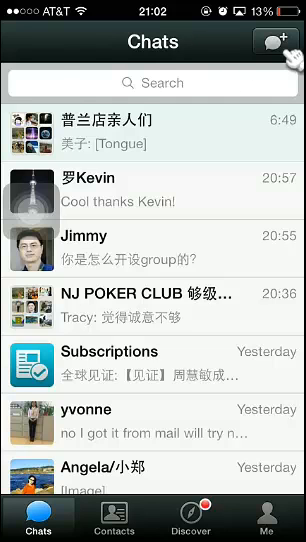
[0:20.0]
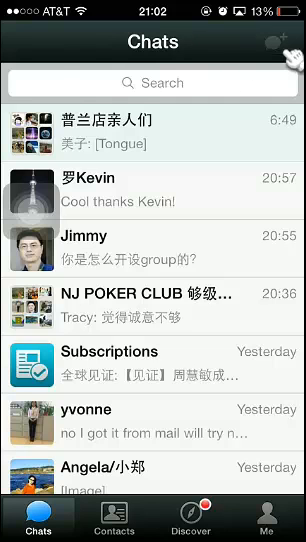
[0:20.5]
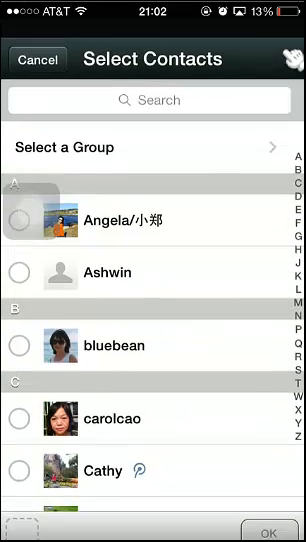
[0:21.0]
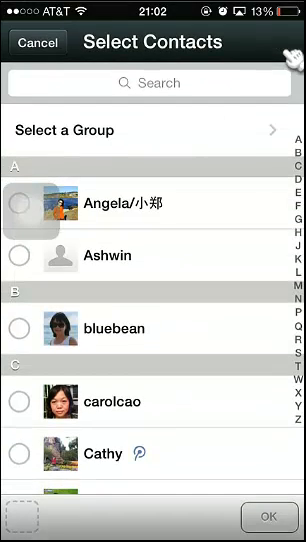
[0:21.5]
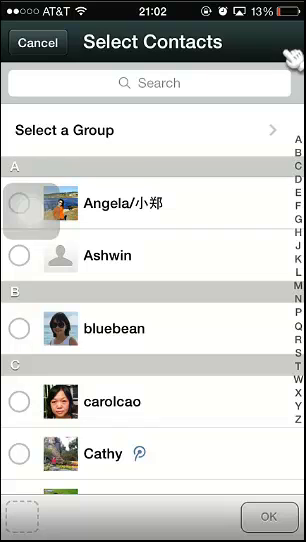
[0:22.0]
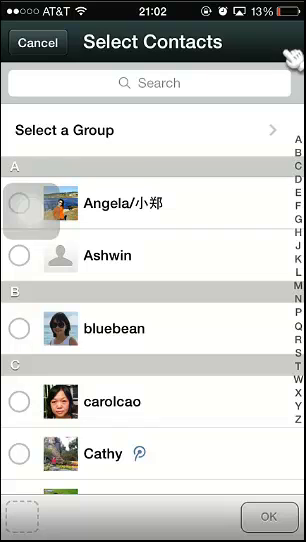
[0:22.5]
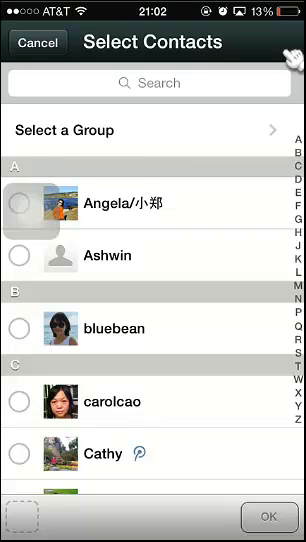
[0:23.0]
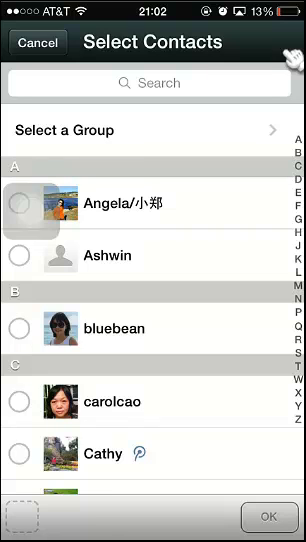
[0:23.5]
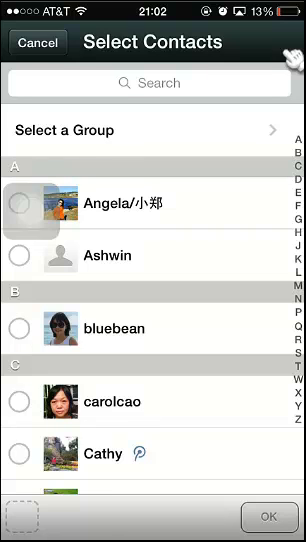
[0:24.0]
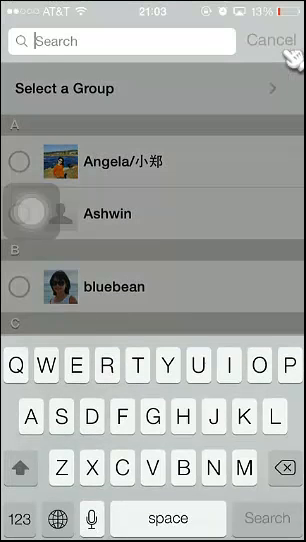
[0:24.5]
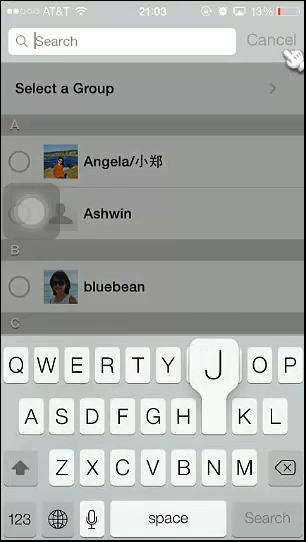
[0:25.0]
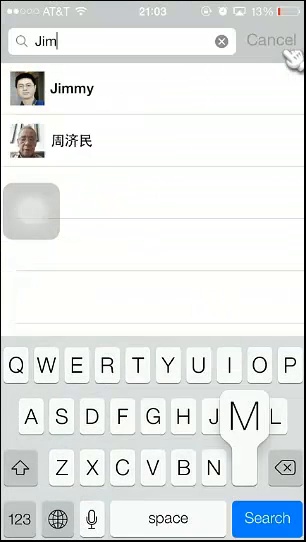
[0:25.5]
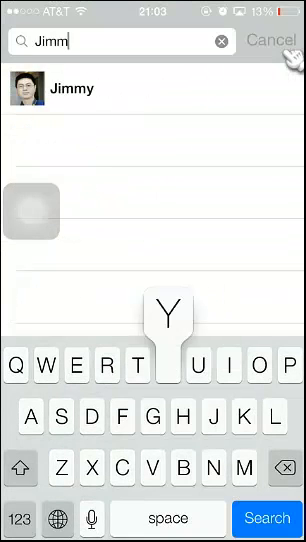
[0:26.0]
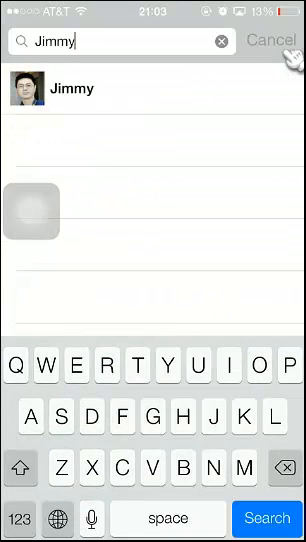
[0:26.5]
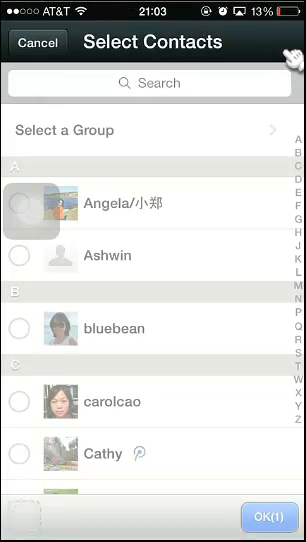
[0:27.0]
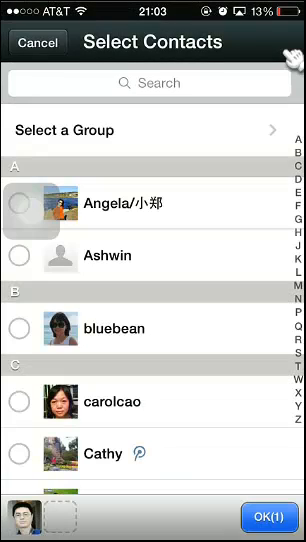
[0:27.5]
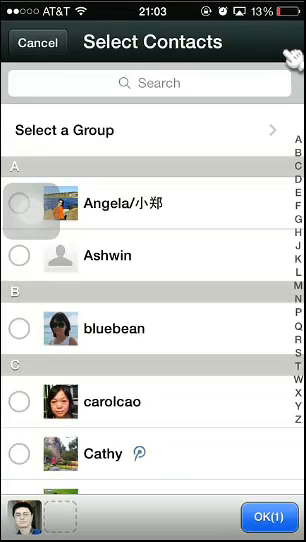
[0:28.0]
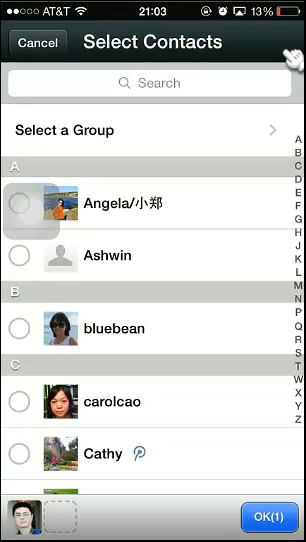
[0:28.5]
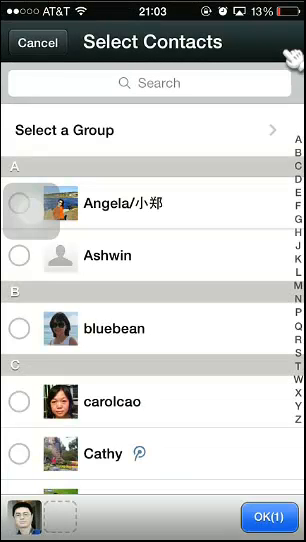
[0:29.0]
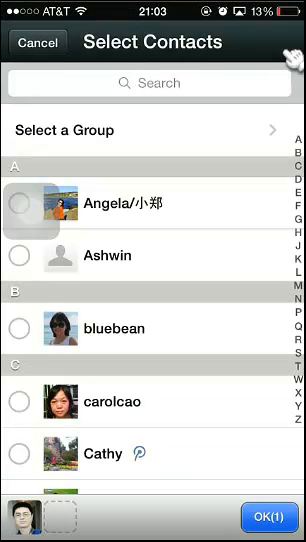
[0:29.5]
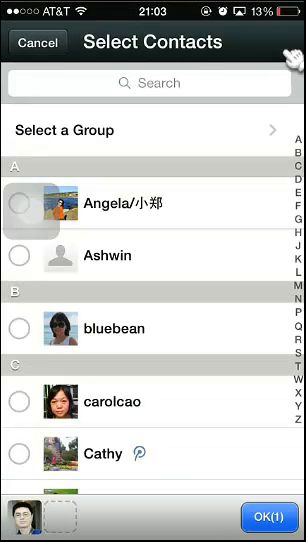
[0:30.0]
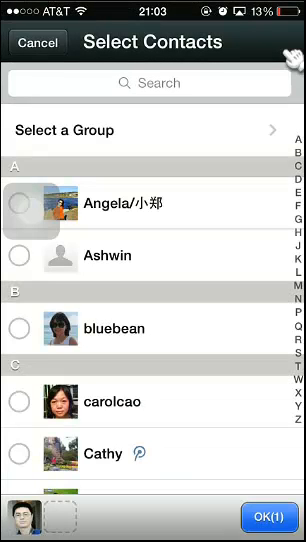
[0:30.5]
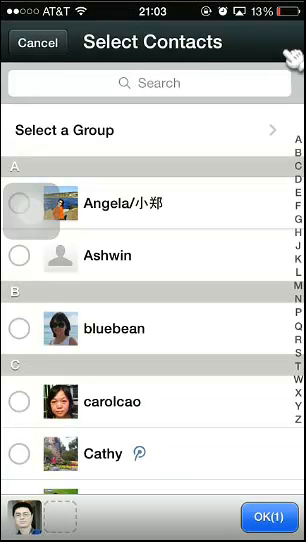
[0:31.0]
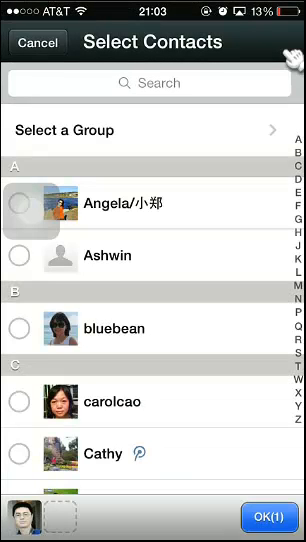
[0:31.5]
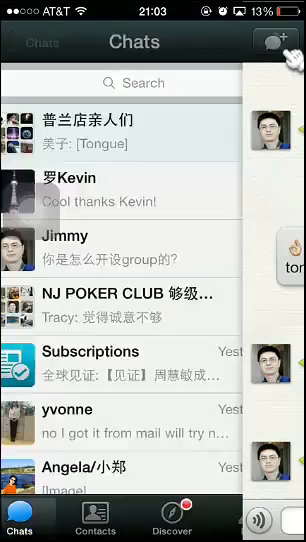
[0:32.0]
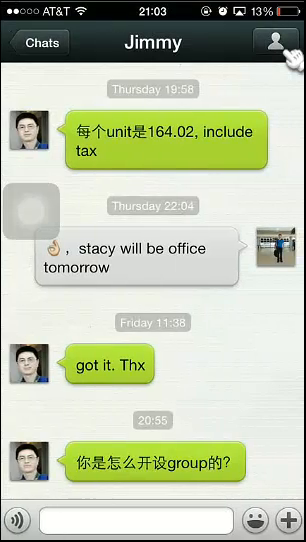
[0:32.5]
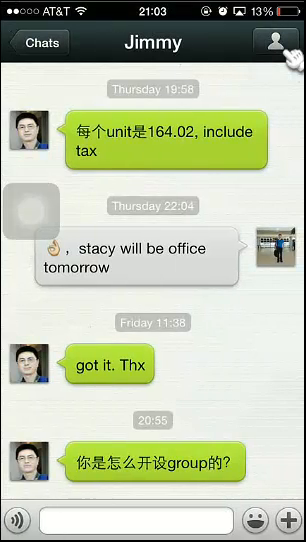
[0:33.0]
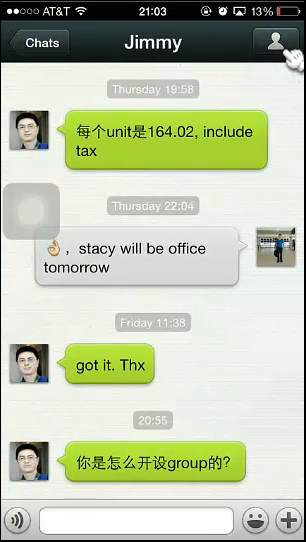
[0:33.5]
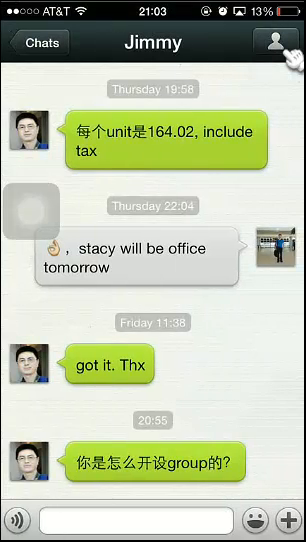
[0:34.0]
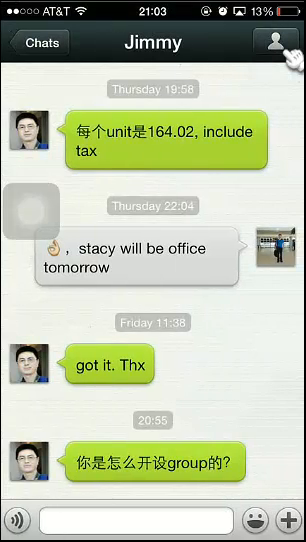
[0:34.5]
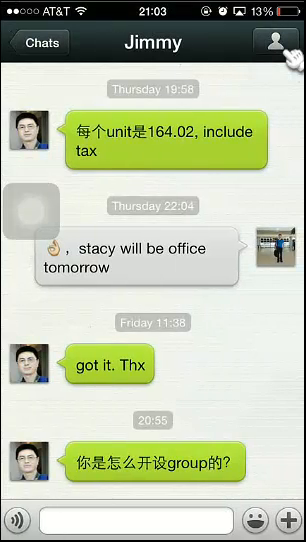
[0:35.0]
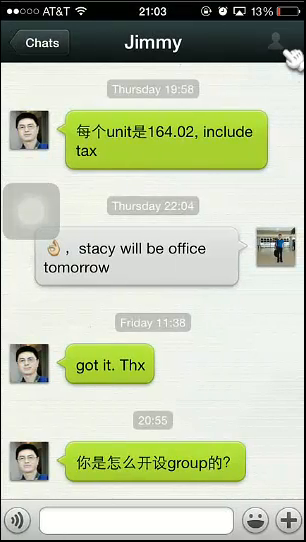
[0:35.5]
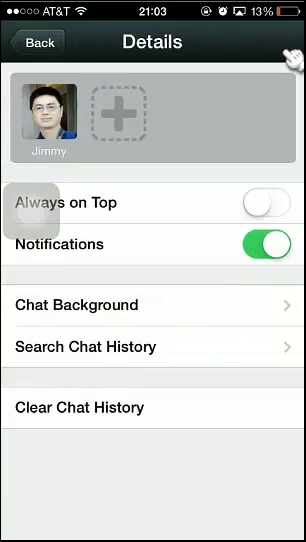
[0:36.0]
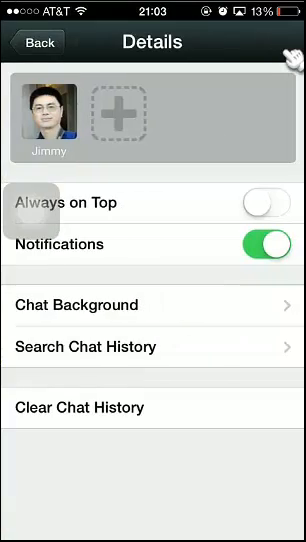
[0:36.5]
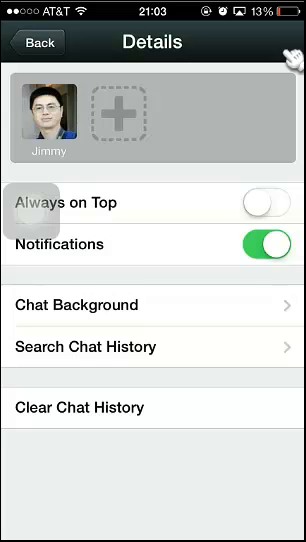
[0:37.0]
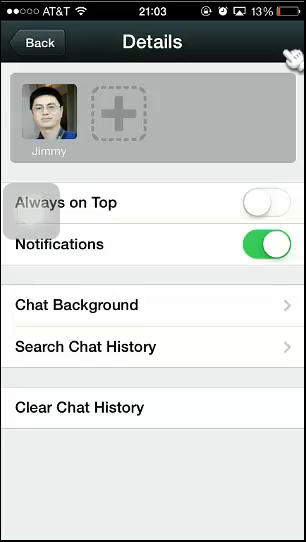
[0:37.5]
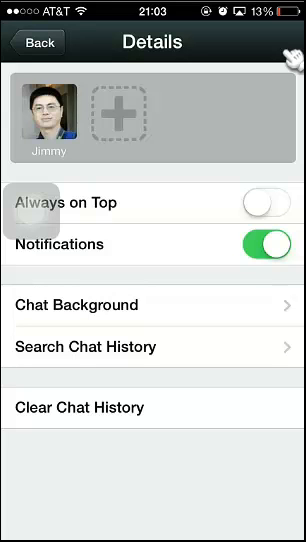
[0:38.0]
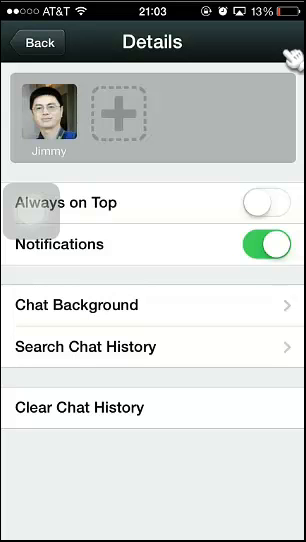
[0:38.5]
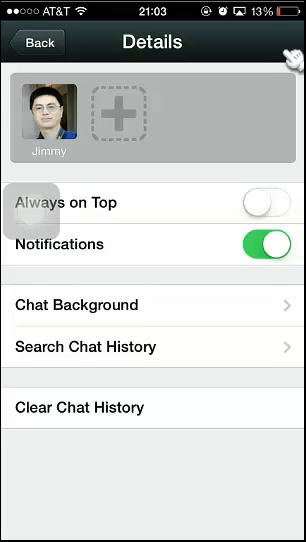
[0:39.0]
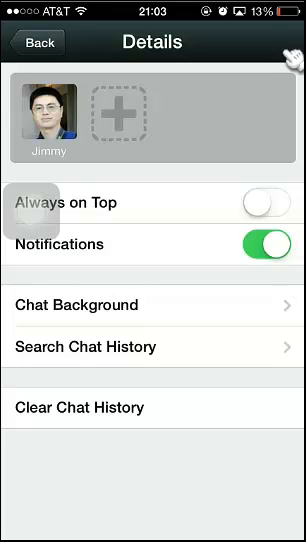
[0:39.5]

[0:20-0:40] The user searches for a contact by entering "Jimmy", and Jimmy shows up in the search results. While the search is in progress, the contacts list shows Angela, Ashwin, Bluebean, Carolcao, Katie and plenty of others. The user opens the conversation with Jimmy, in which Jimmy says "Unit 164.02 includes tax." The user replies with a thumbs up and "Stacy will be in the office tomorrow, got it, thanks." Jimmy then asks for the group. The user taps the menu option, which reveals Jimmy's profile; his profile picture shows him with black hair, wearing glasses and a black t-shirt. Below it are menu items such as always-on-top, notifications, chat background, search chat history and clear chat history, with toggles for chat notifications and always-on-top. The WeChat app's background is white and black, while Jimmy's messages appear in green bubbles and the owner's in gray bubbles.